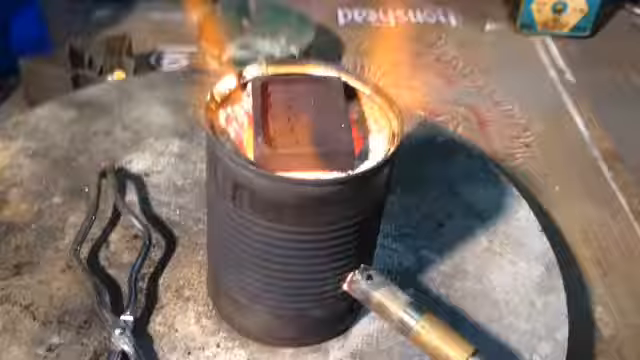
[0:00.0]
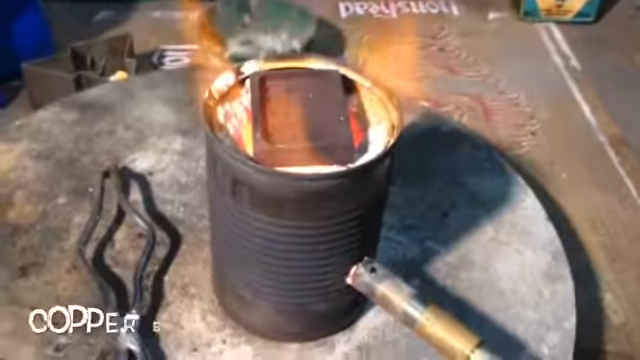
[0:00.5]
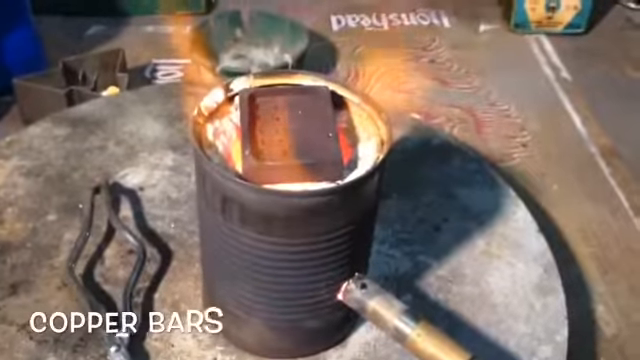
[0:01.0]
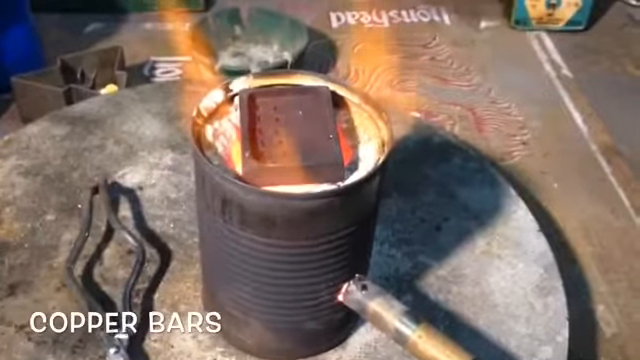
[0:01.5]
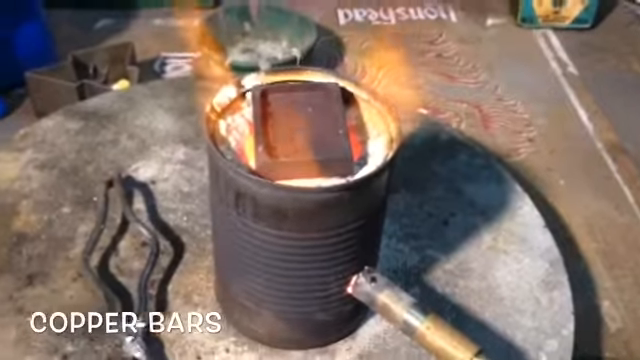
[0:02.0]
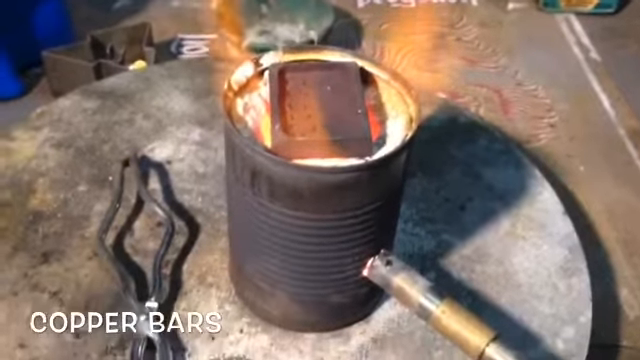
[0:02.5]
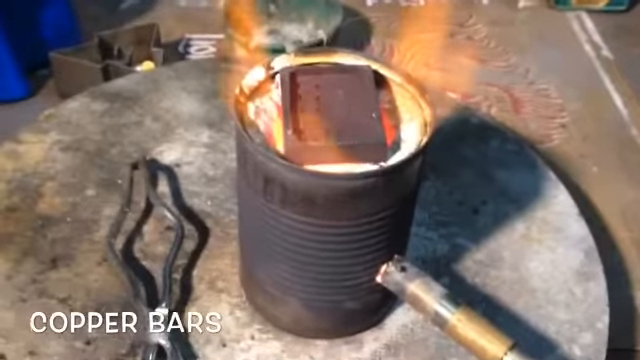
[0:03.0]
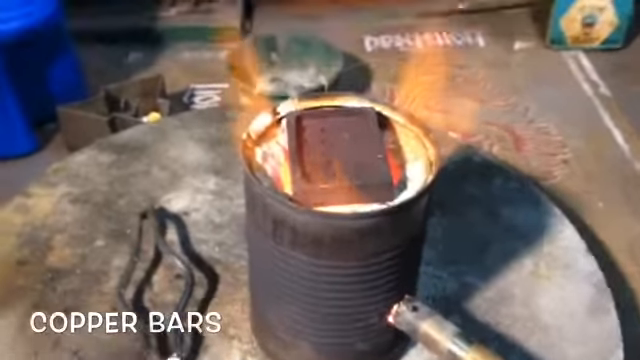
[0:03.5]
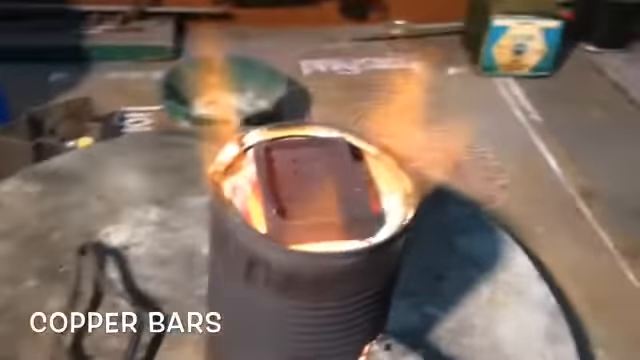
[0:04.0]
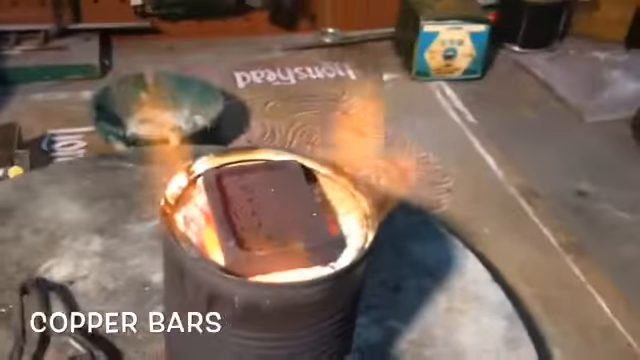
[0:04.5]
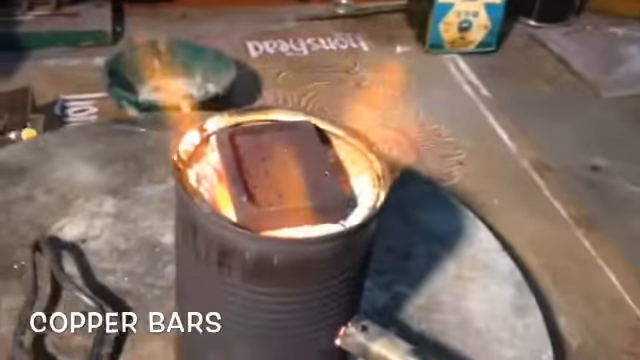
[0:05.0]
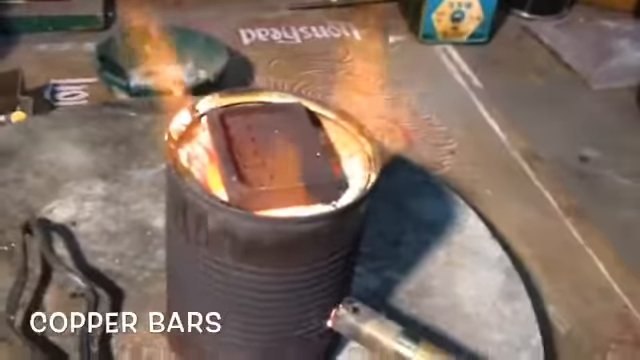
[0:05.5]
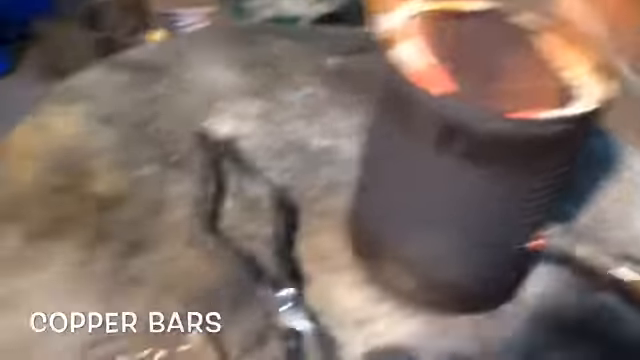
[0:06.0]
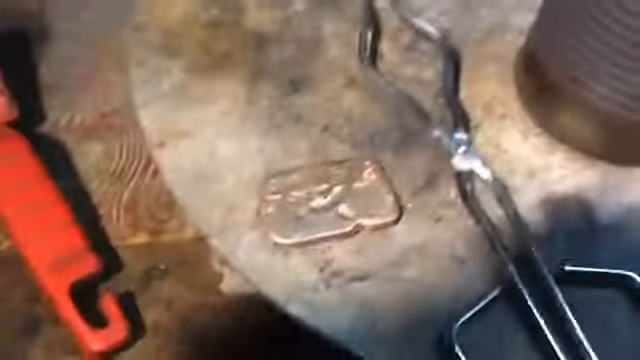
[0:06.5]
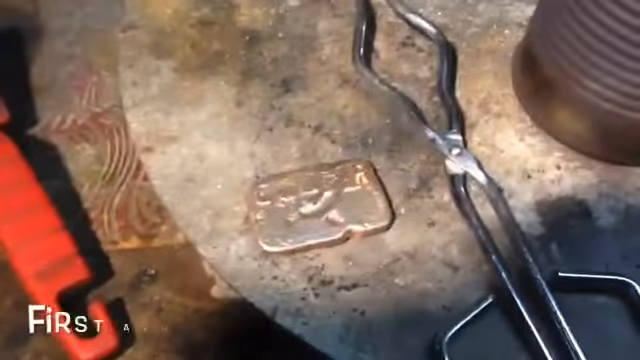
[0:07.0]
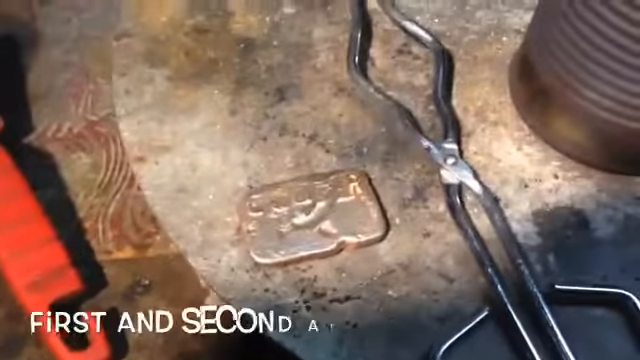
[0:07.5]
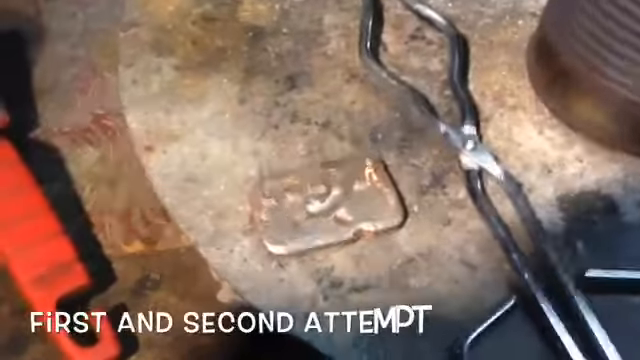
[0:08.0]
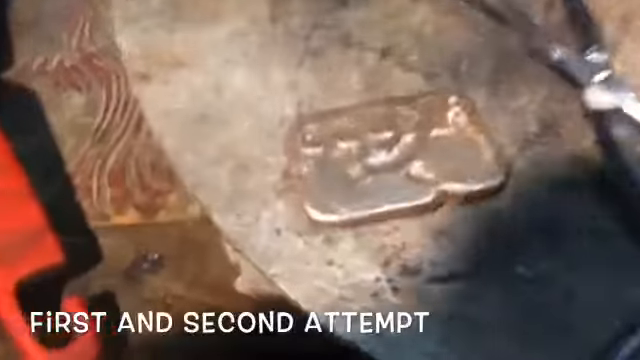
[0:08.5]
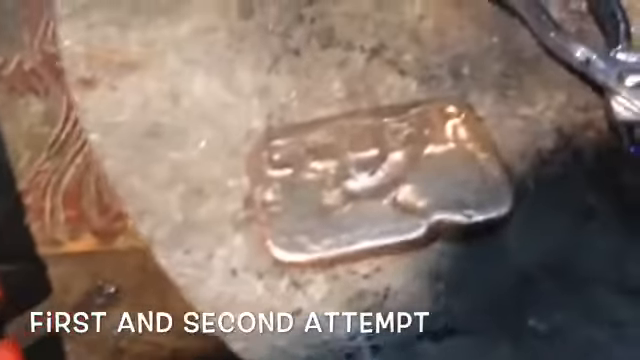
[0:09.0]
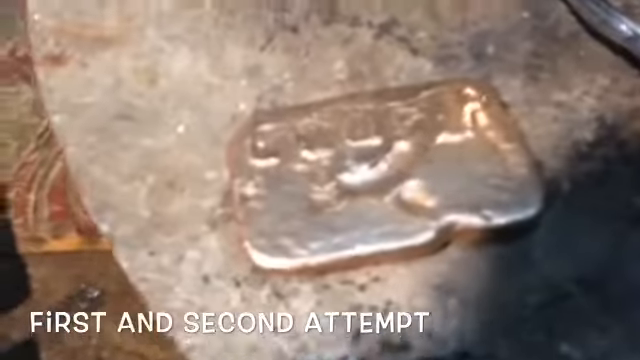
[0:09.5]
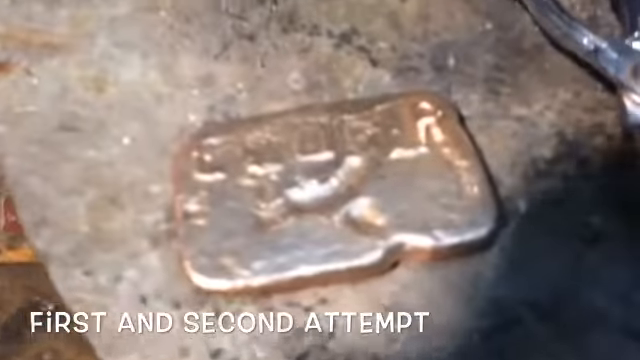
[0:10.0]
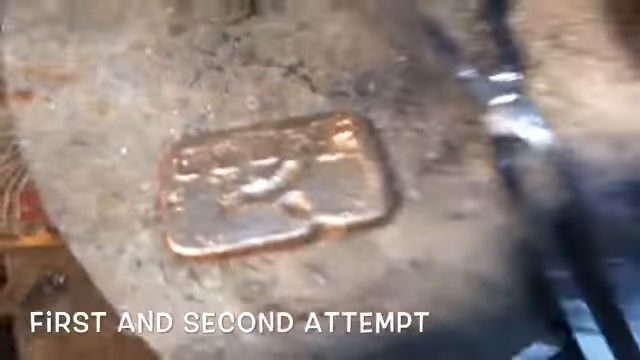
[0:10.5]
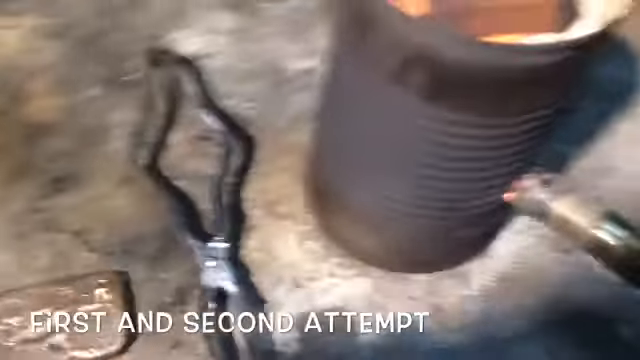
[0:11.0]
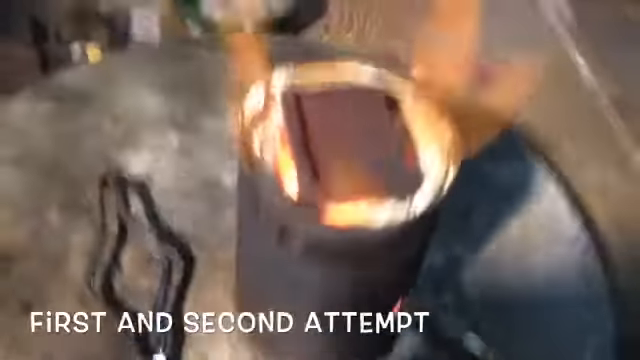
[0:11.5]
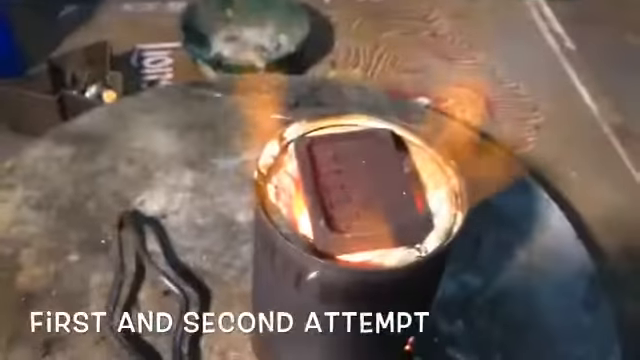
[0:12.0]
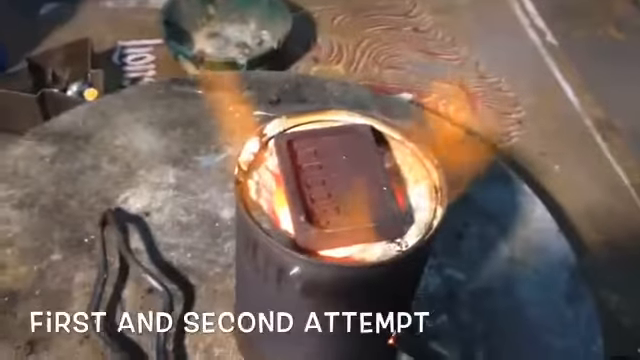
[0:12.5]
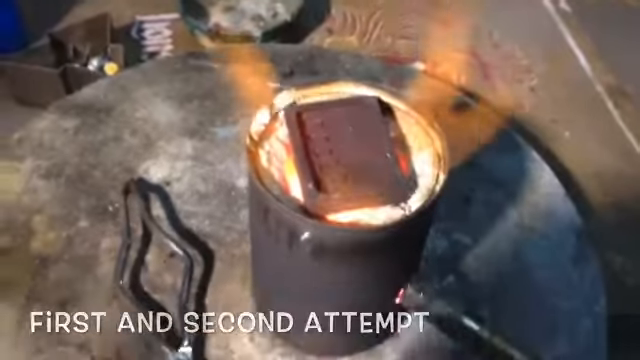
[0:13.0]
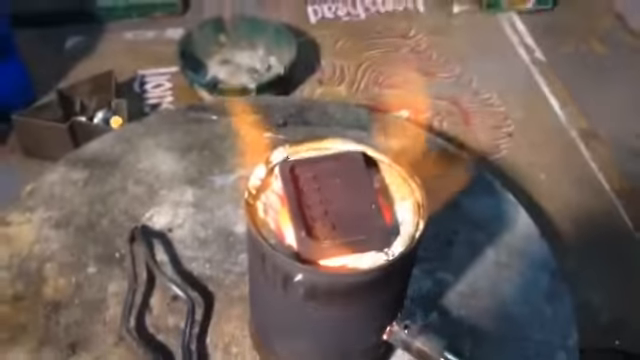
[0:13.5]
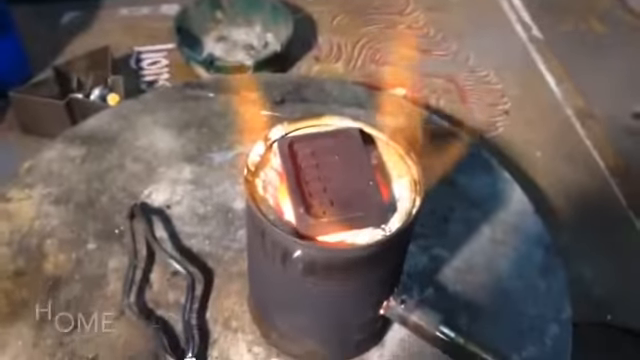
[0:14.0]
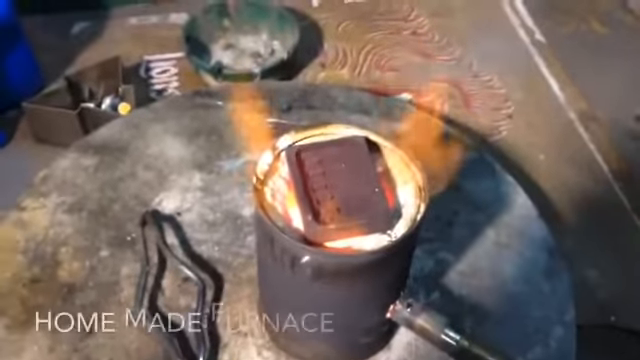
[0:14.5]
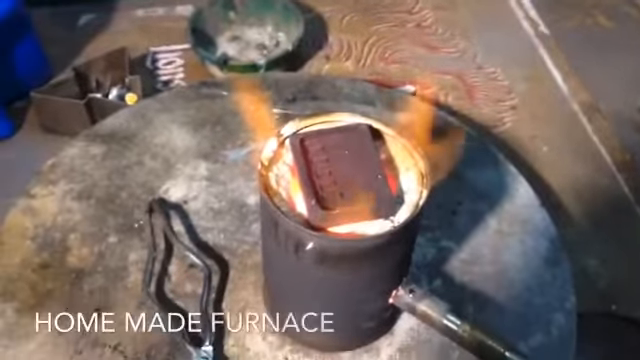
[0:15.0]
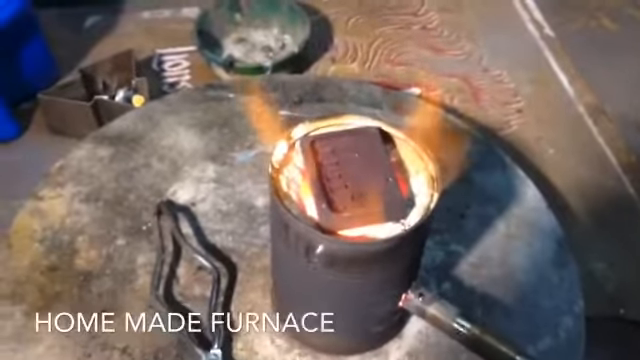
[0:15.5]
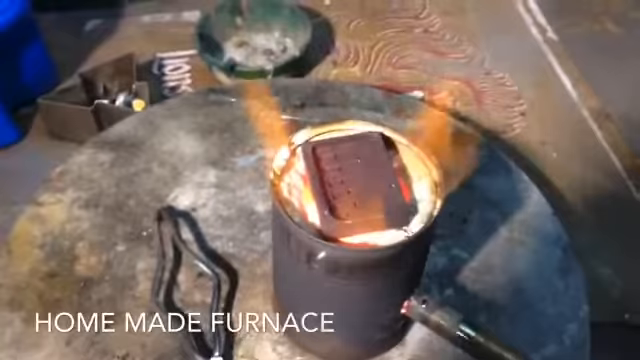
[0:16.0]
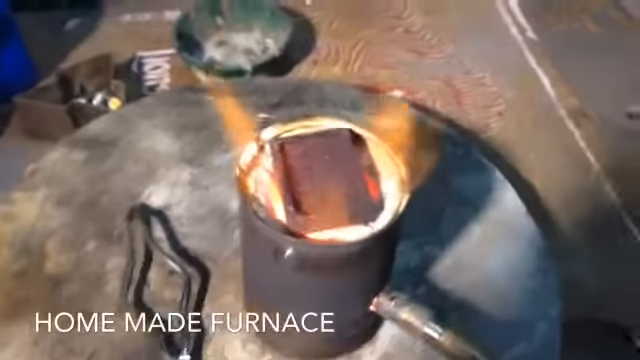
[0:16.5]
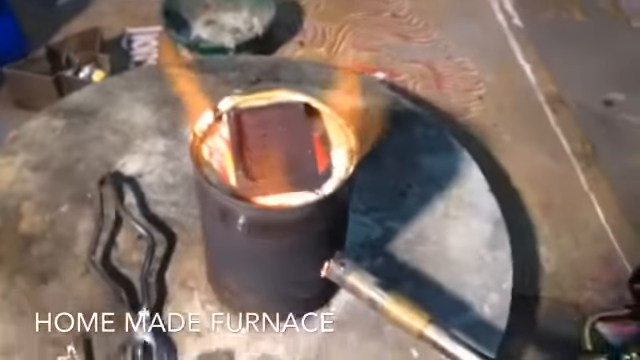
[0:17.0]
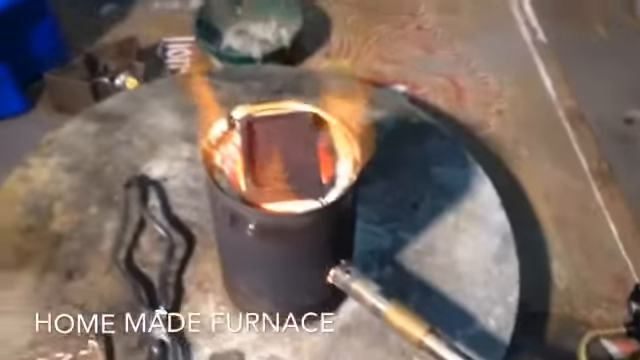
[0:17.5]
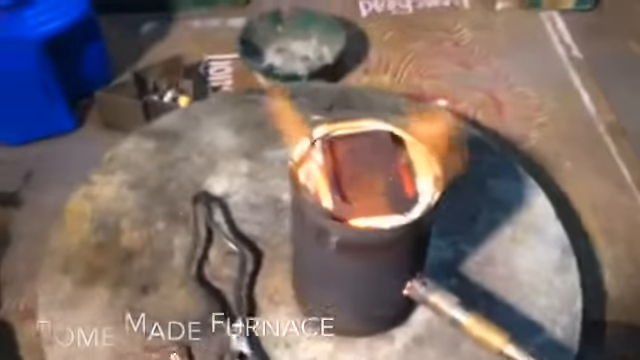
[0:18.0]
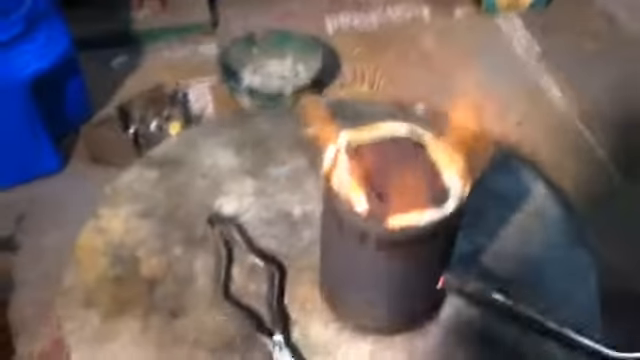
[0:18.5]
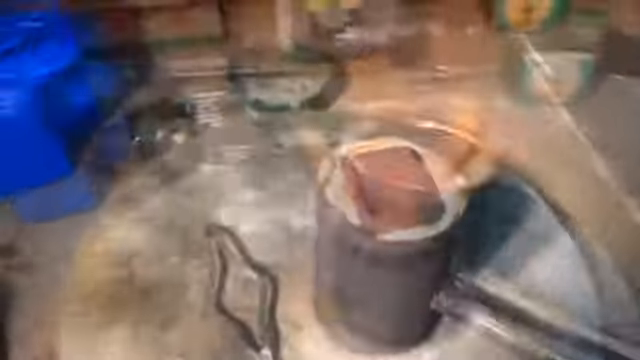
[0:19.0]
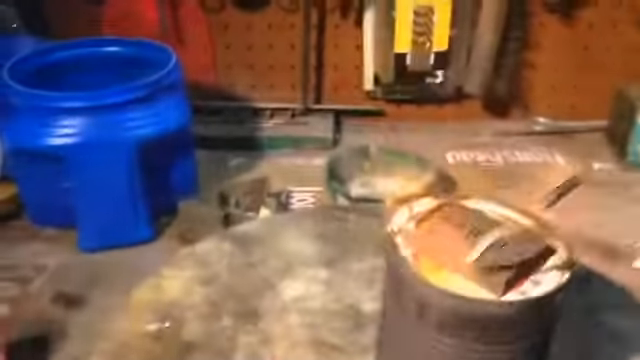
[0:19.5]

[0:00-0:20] Against a gray metal background, a dark gray barrel with a brown square piece is at the center; it seems to be sitting on a flame, with white charcoal underneath. A gray and gold pipe sticks out of the right side of the barrel, and what appear to be gray tongs with wide handles are on the left. Text at the bottom left reads "copper bars." A yellow flame pops up over the top of the barrel, and a rounded metal piece is in the background. Beside the gray metal tongs is a silver square, almost like a silver piece of metal, sort of slightly indented. More text appears at the bottom: "first and second attempt." The camera zooms in on the piece of metal as the yellow flames continue, and the lettering changes to "homemade furnace."